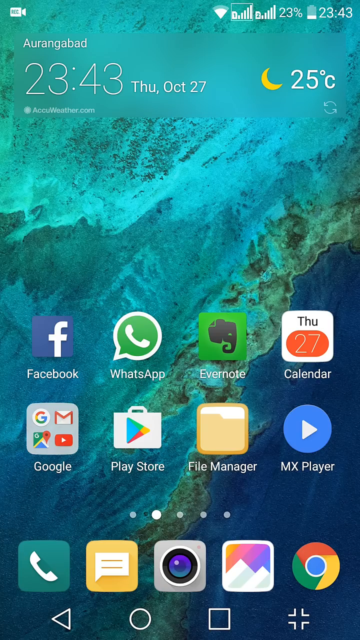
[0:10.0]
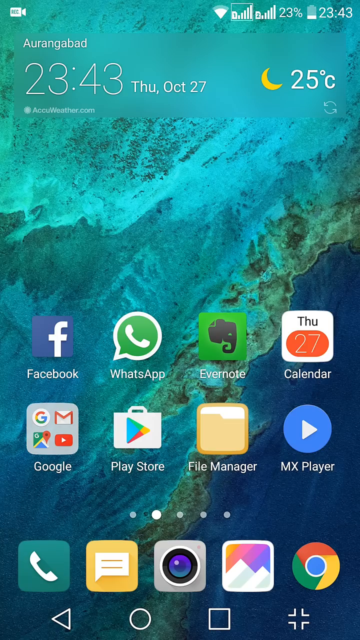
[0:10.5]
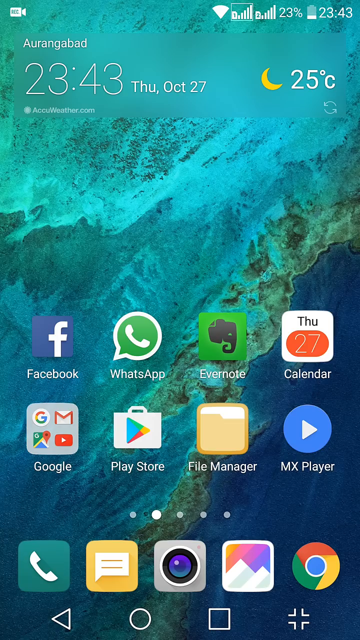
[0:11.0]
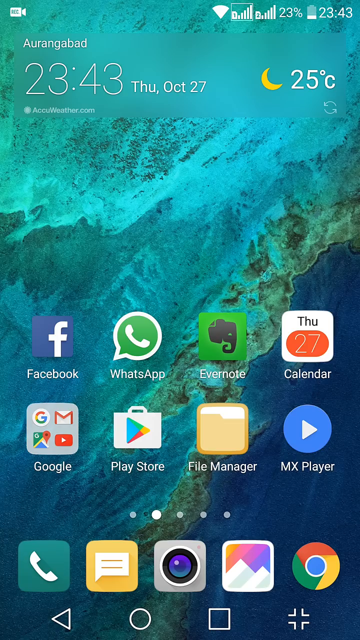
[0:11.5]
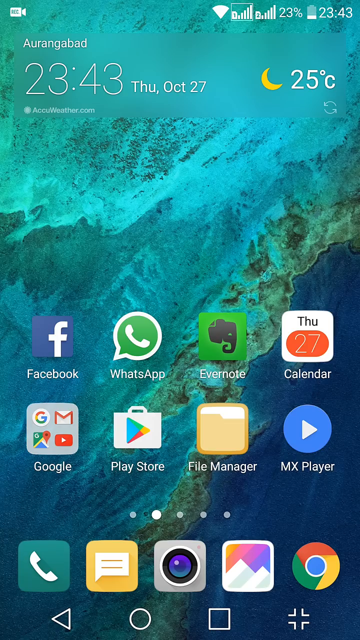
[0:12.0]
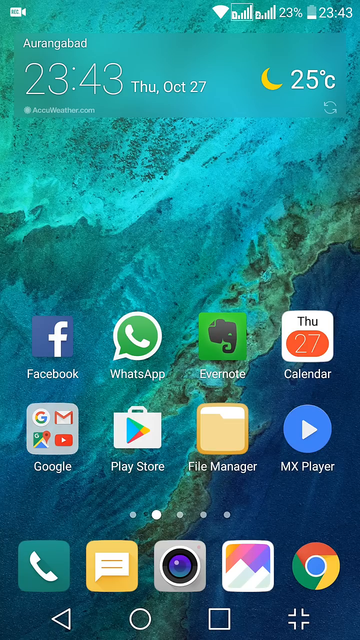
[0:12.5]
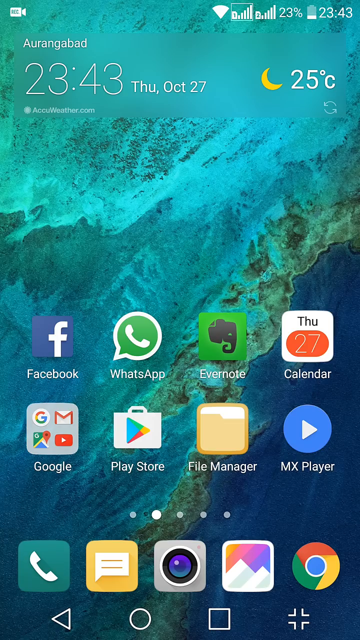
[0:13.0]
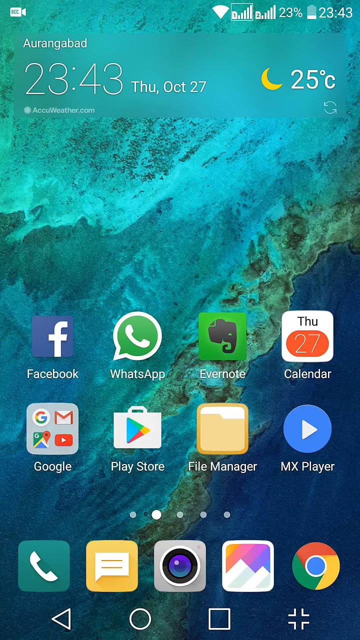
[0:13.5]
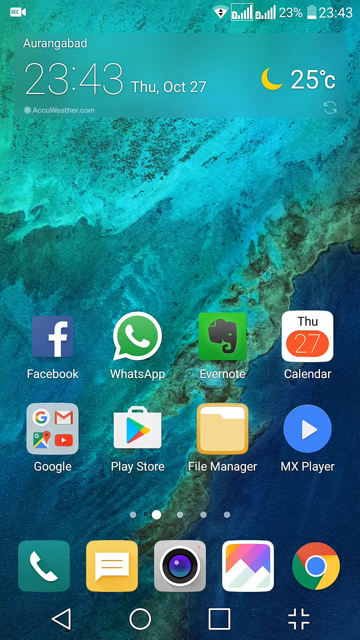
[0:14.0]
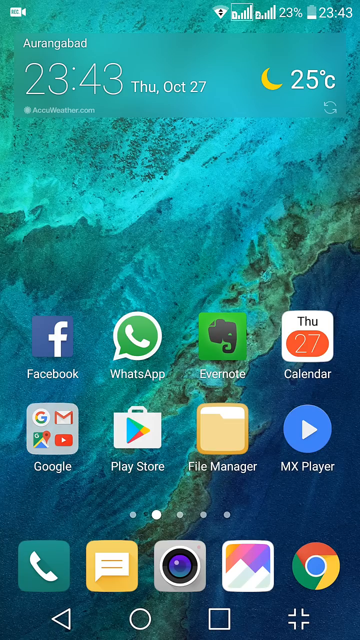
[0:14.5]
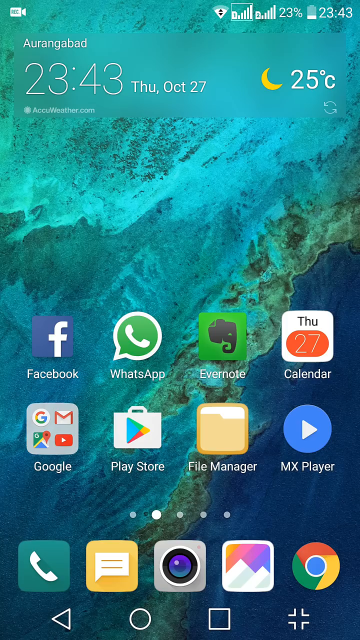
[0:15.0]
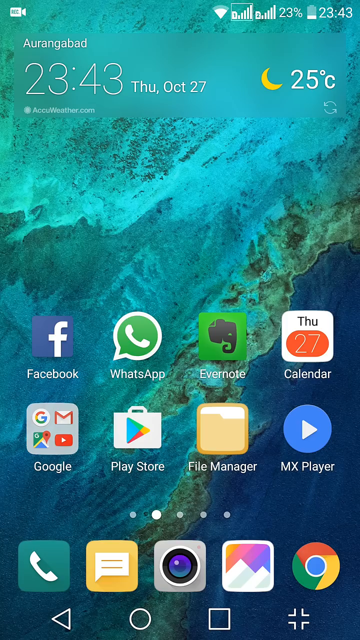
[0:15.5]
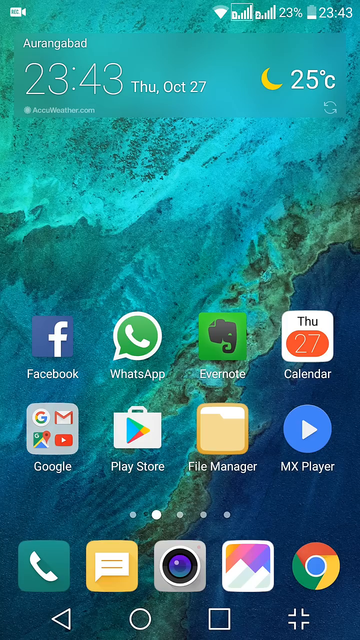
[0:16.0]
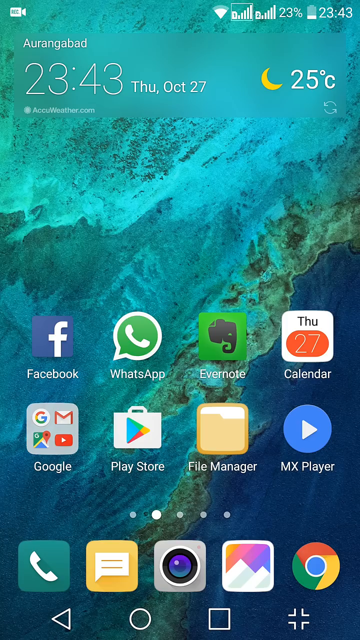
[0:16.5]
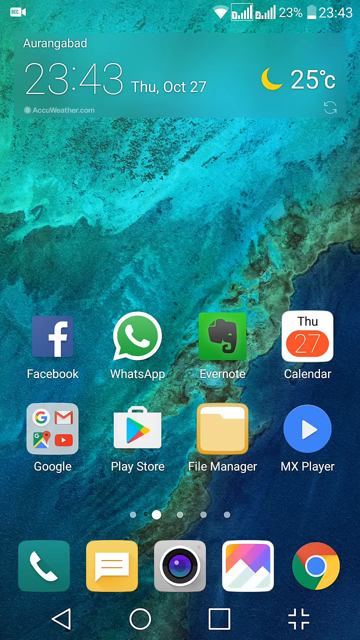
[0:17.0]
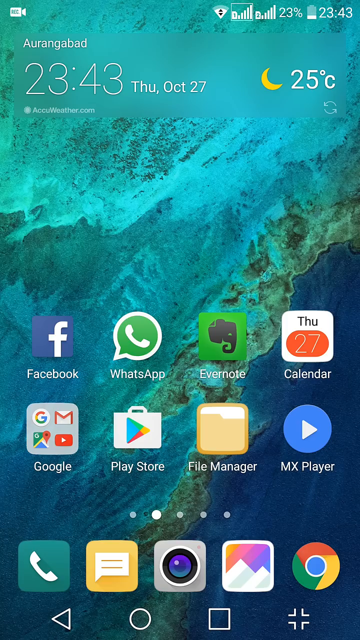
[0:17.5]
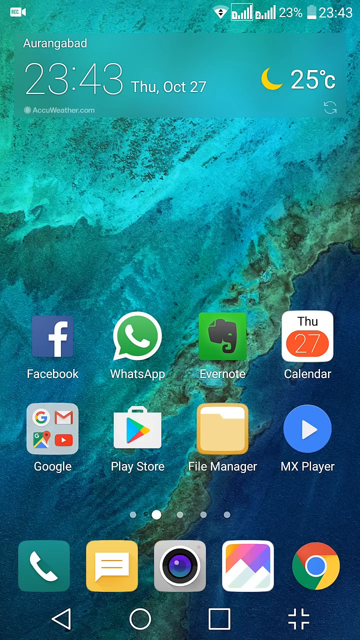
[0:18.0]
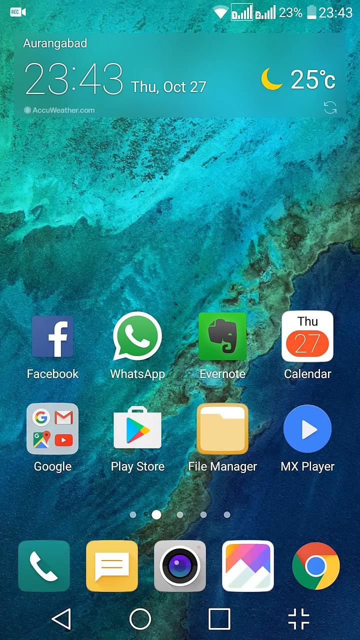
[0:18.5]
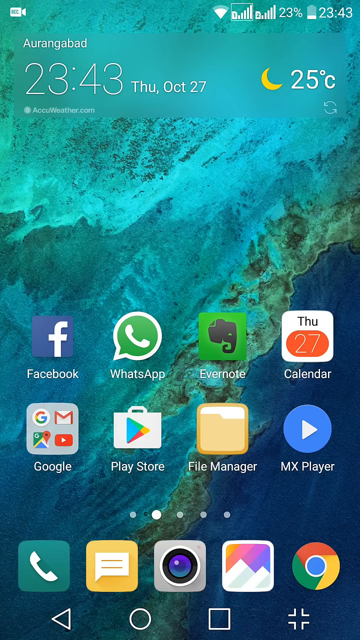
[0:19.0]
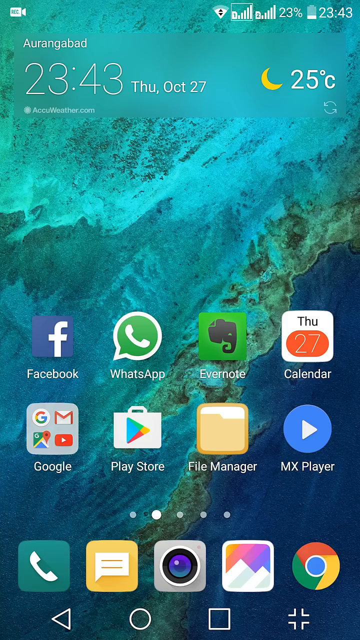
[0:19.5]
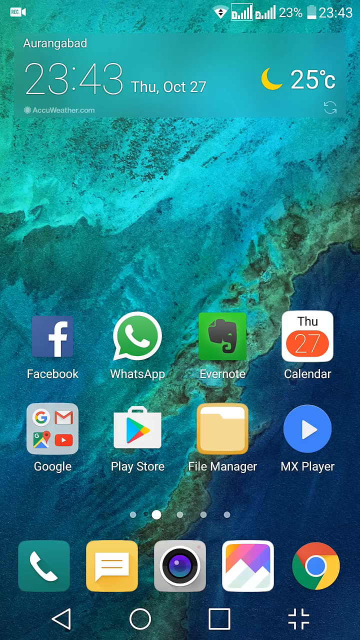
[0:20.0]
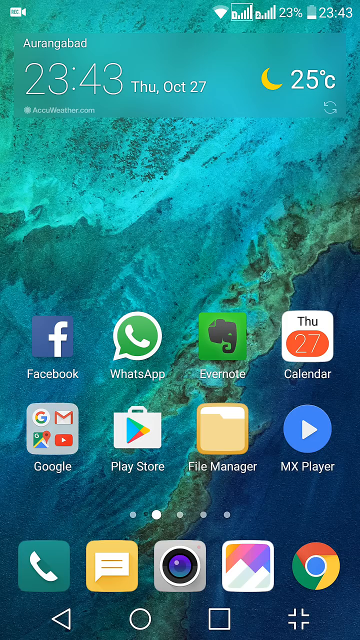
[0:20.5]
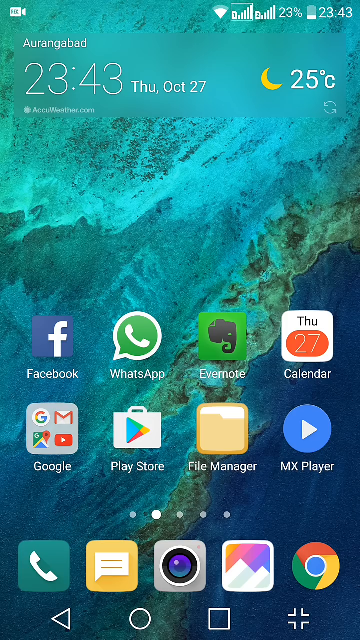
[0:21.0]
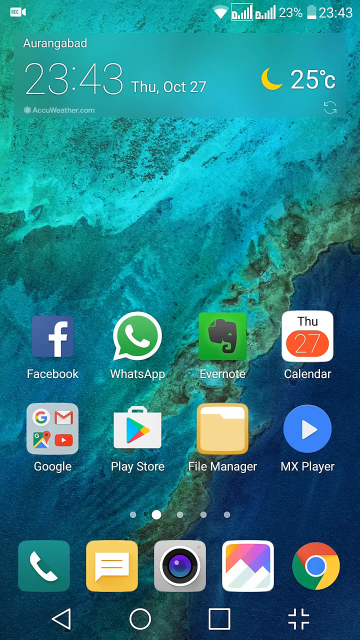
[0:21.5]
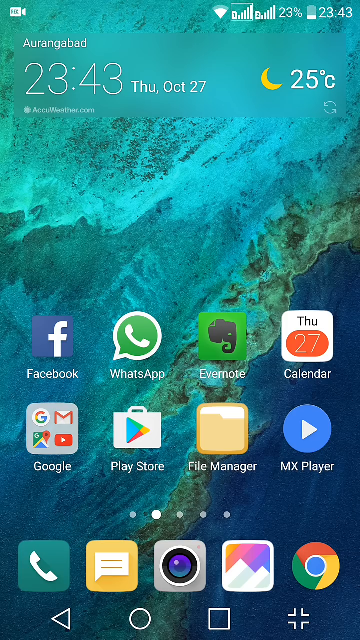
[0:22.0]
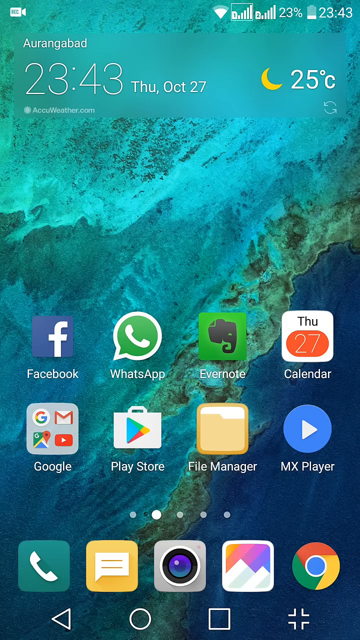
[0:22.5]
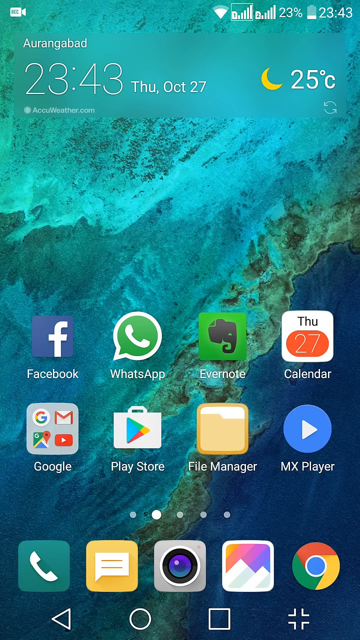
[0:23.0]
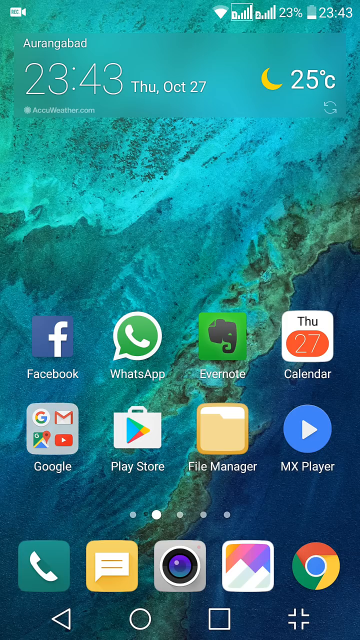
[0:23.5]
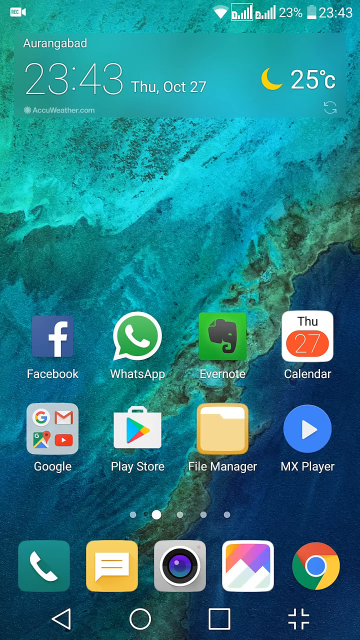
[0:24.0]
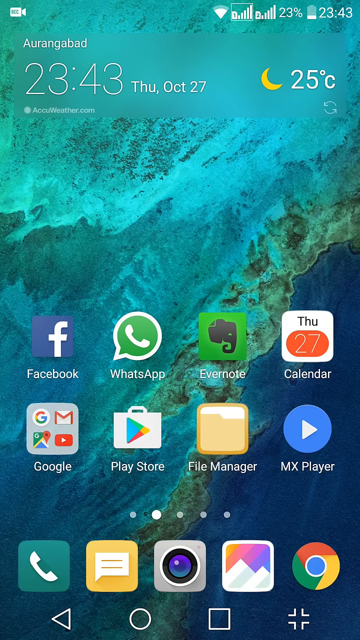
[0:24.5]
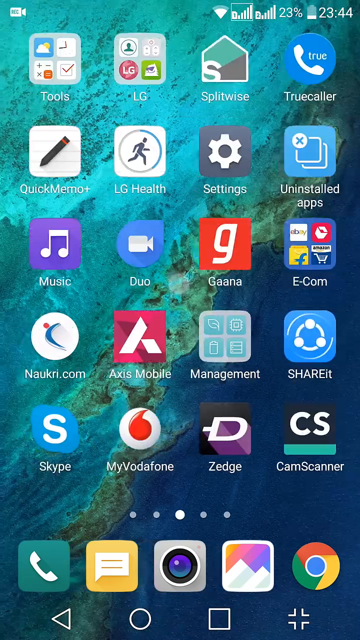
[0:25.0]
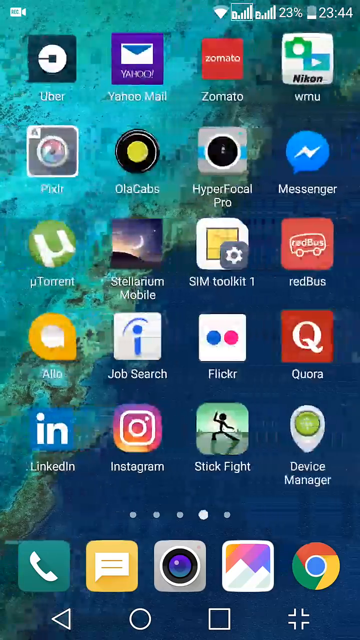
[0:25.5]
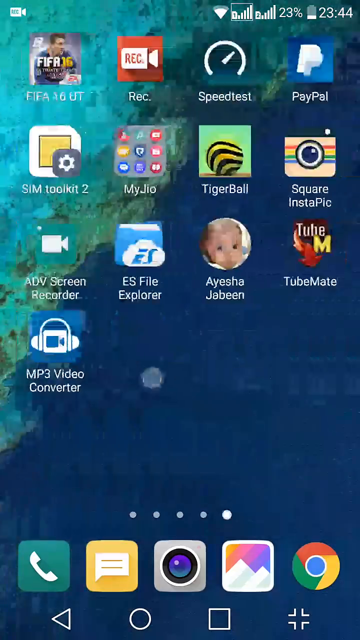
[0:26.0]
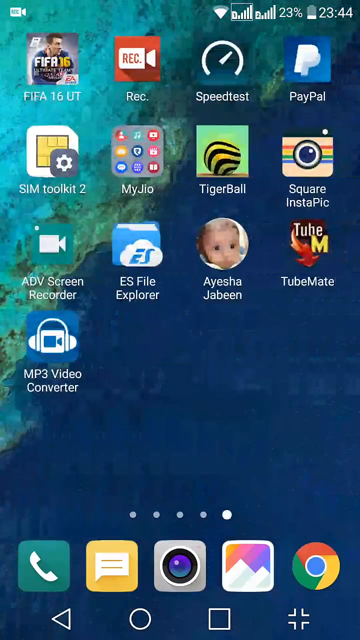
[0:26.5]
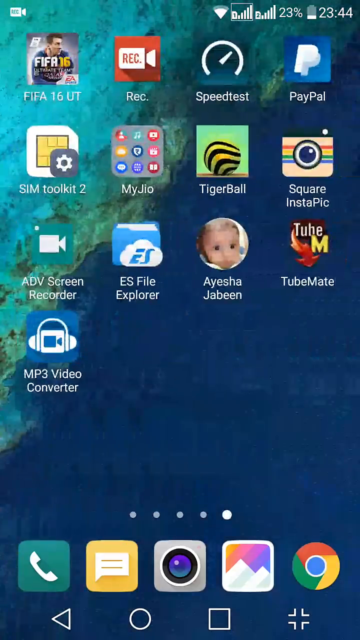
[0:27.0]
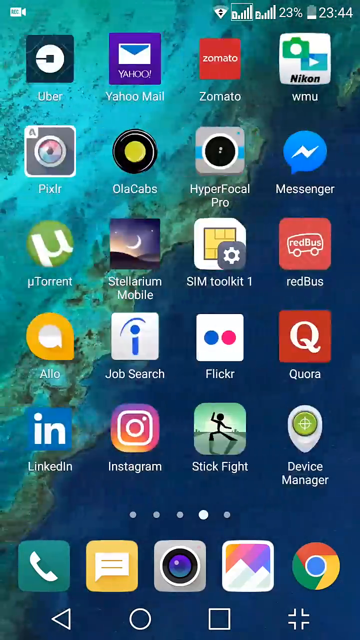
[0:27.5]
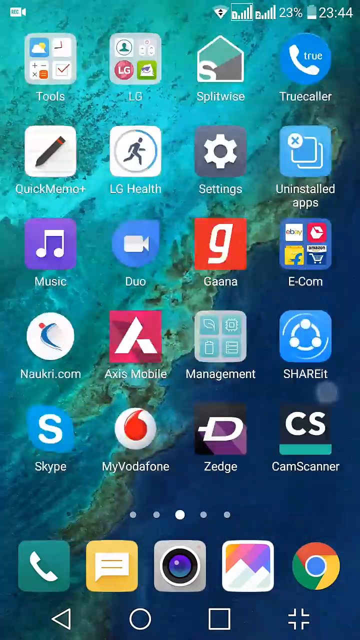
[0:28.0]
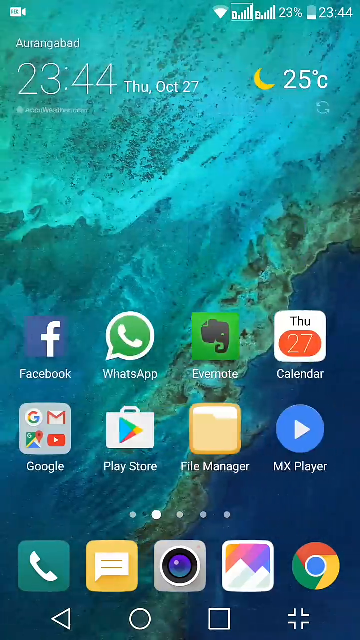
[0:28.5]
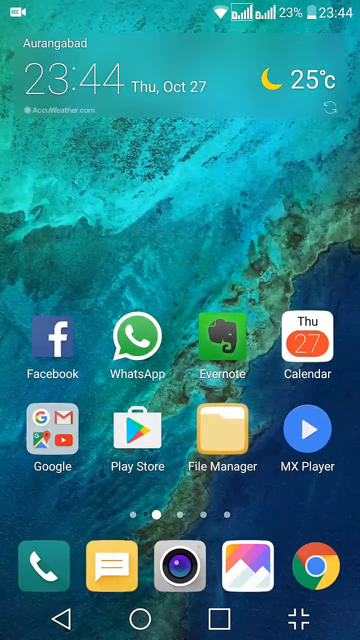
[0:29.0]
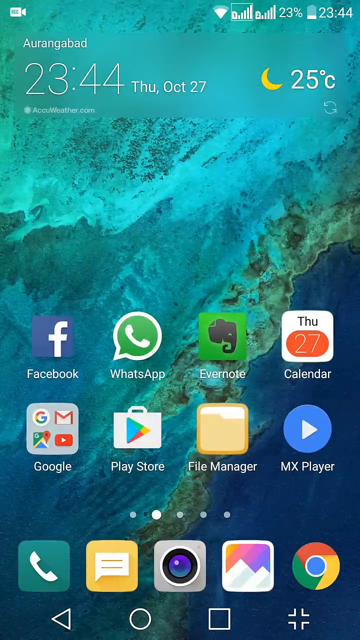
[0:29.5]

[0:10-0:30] The time "2343" appears in the upper right-hand corner, which is 11:43, almost midnight in military time. The battery is charged at 23%. Underneath it reads "25 degrees Celsius", and to the left of that is a yellow crescent, indicating nighttime. On the same level but further to the left it reads "THU, OCT 27" for Thursday, October 27th, along with the time again. In the upper left-hand corner is a white camera. Apps at the bottom include Facebook, WhatsApp, Evernote, Calendar, Google Play Store, File Manager and MX Player. At the very bottom are a phone icon, a green text message icon, a yellow square, and what appears to be a camera lens icon. Partway through, after the same screen has been shown for a while, the person finally starts moving and more apps come into view, including Job Search for Indeed, LinkedIn, Instagram, Stick Fight, Device Manager and Messenger.